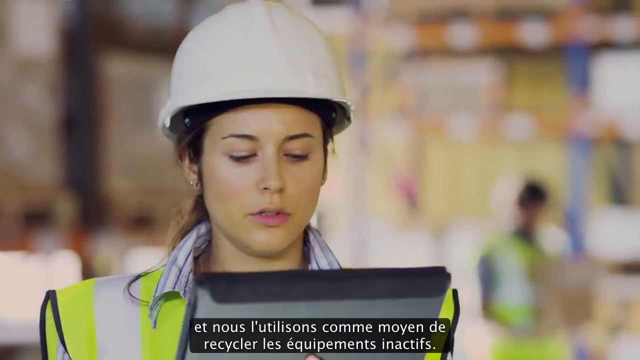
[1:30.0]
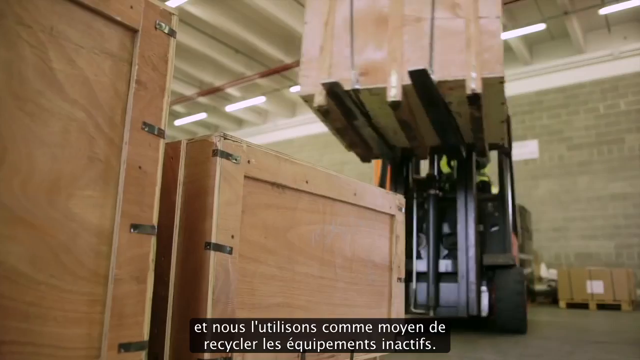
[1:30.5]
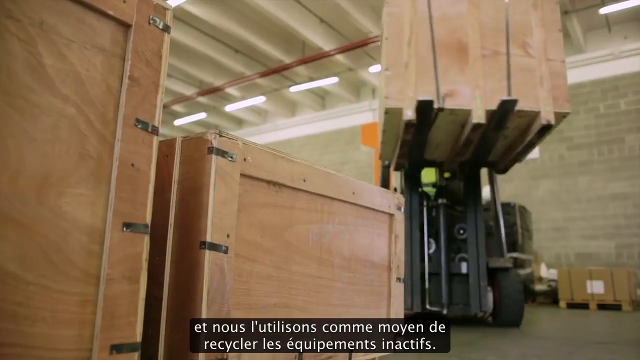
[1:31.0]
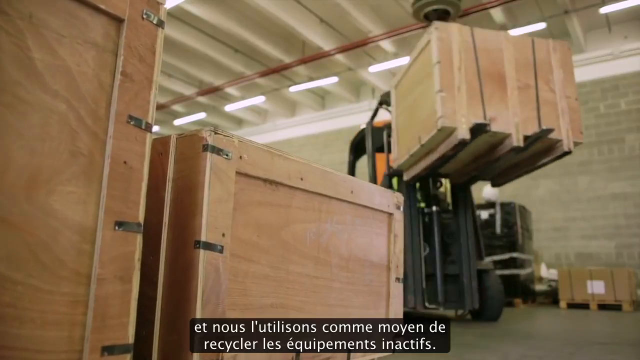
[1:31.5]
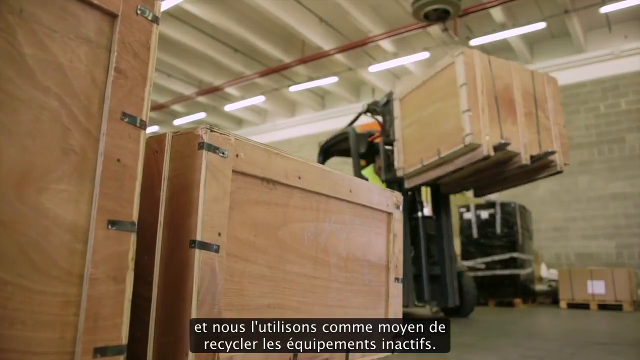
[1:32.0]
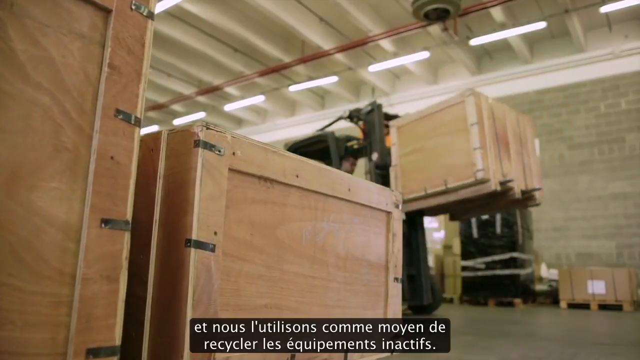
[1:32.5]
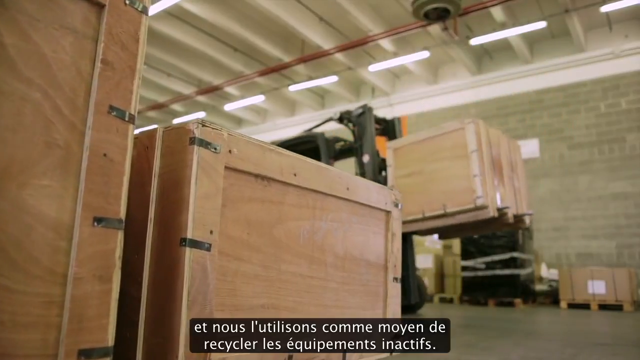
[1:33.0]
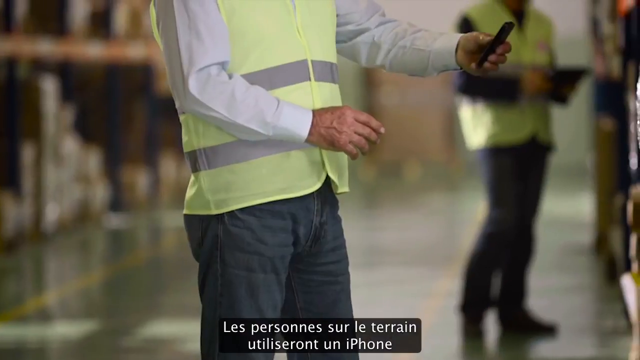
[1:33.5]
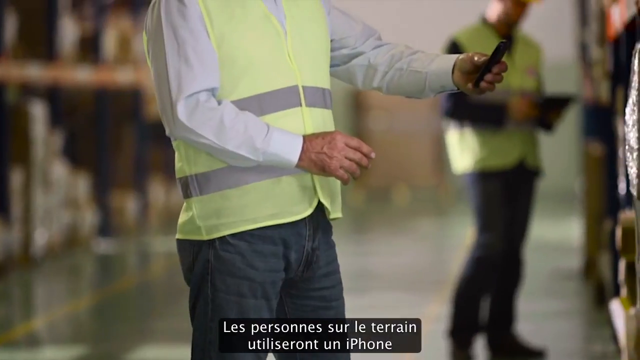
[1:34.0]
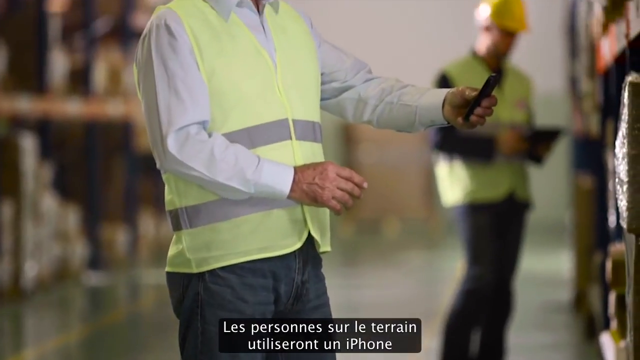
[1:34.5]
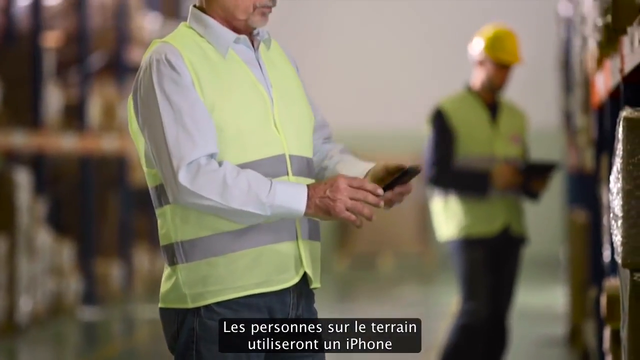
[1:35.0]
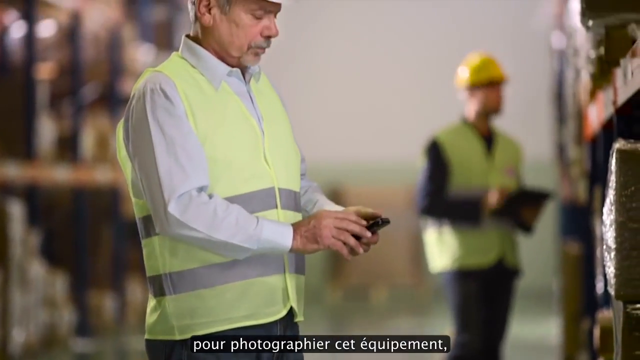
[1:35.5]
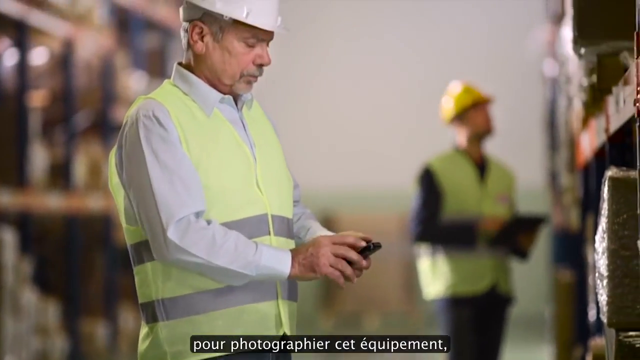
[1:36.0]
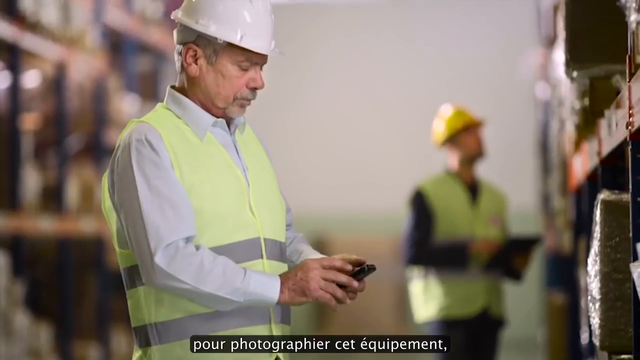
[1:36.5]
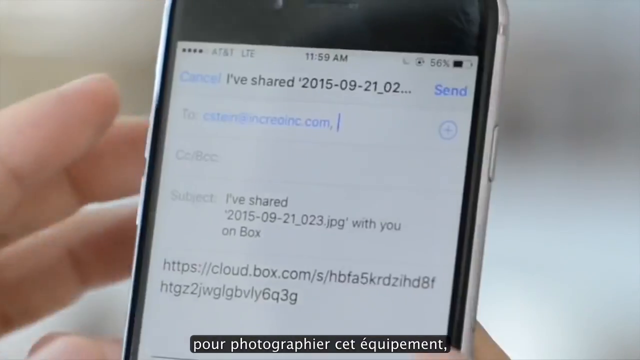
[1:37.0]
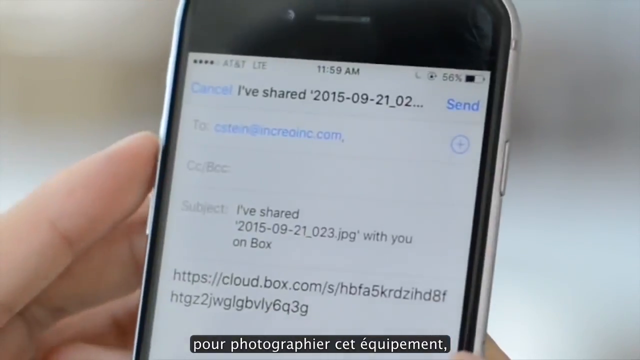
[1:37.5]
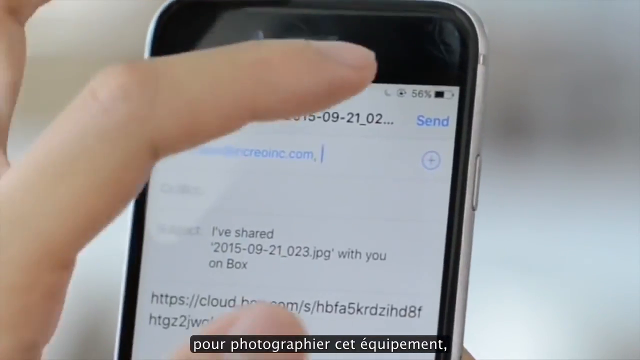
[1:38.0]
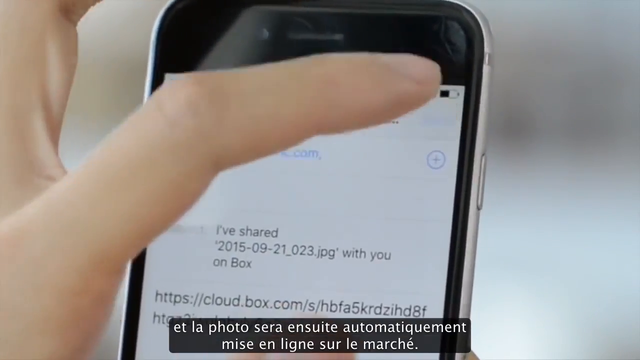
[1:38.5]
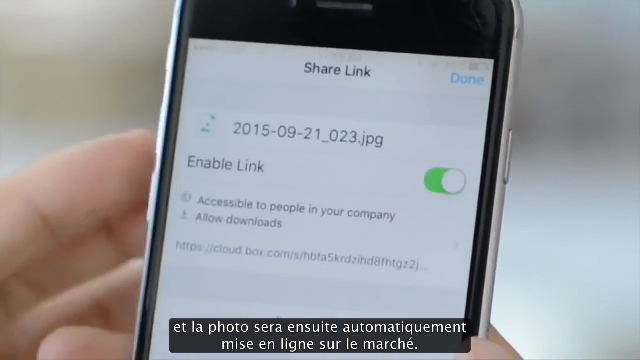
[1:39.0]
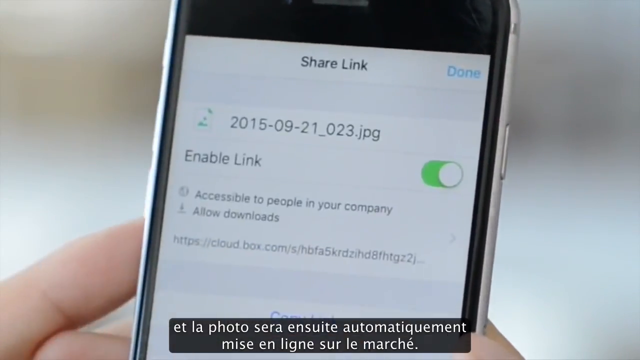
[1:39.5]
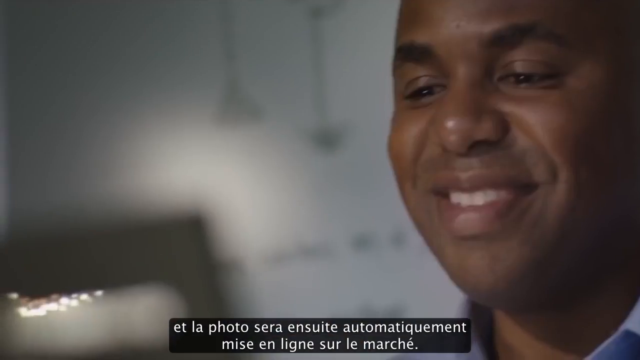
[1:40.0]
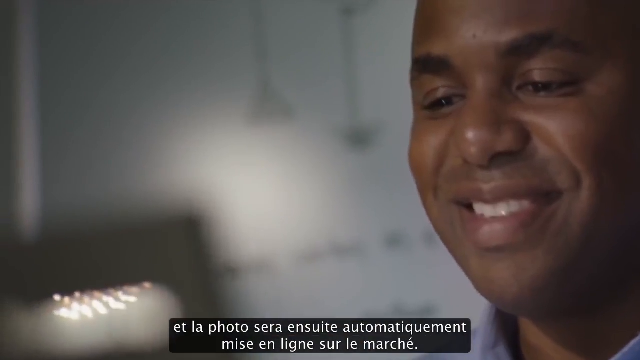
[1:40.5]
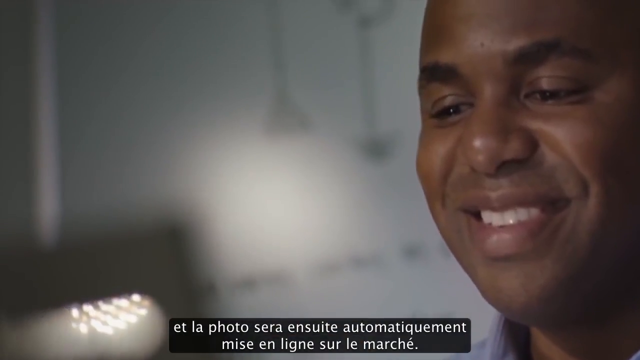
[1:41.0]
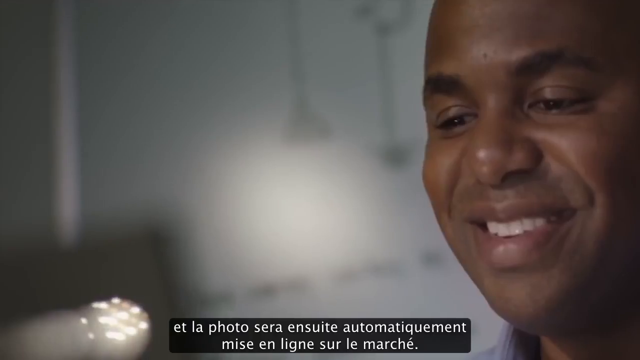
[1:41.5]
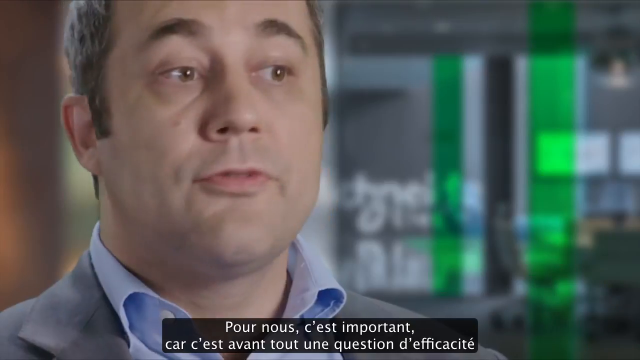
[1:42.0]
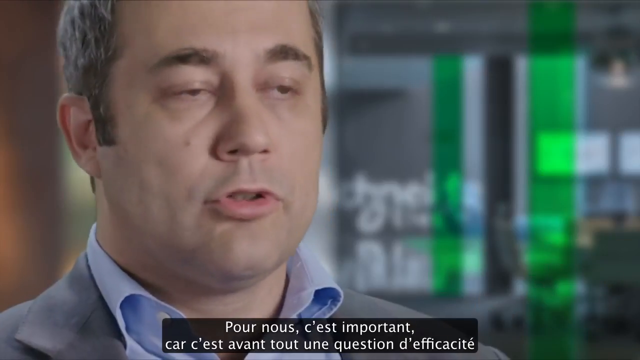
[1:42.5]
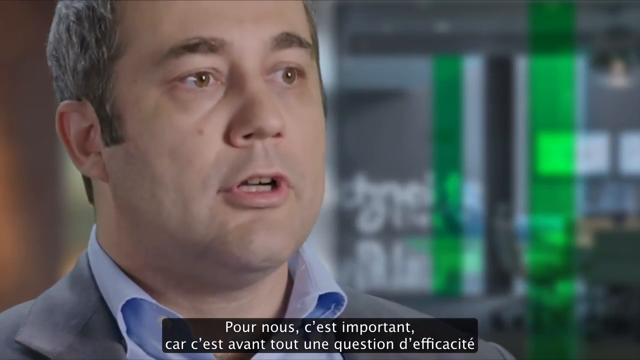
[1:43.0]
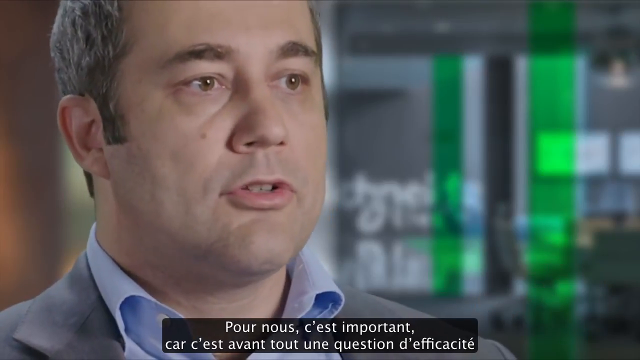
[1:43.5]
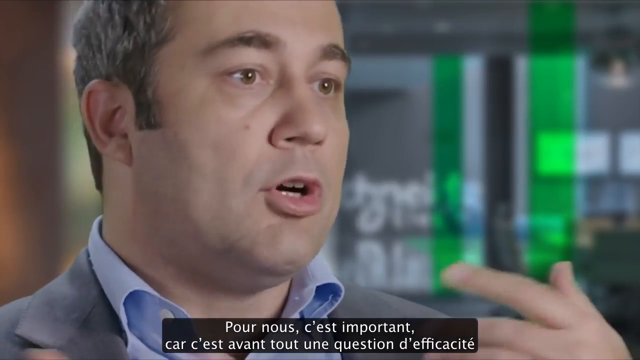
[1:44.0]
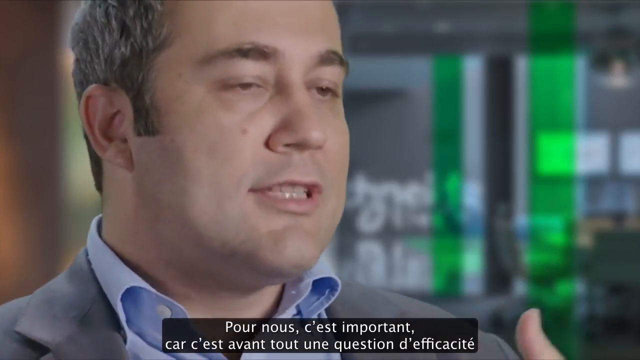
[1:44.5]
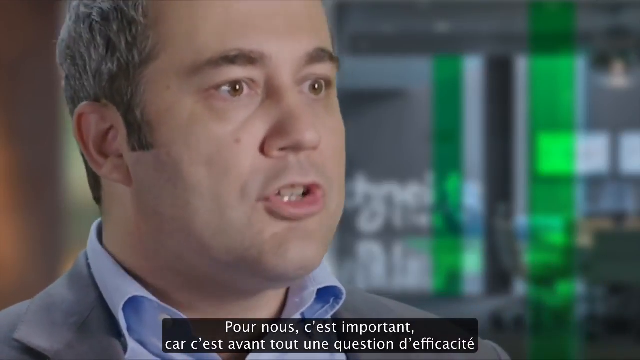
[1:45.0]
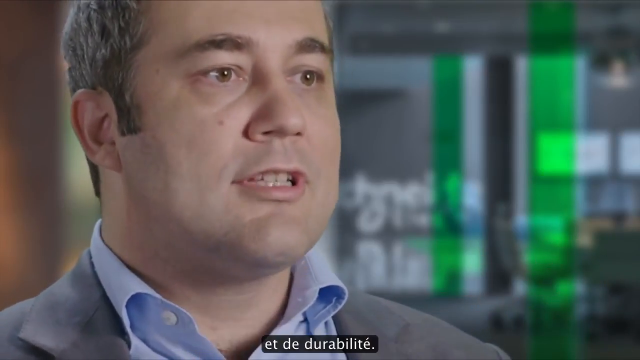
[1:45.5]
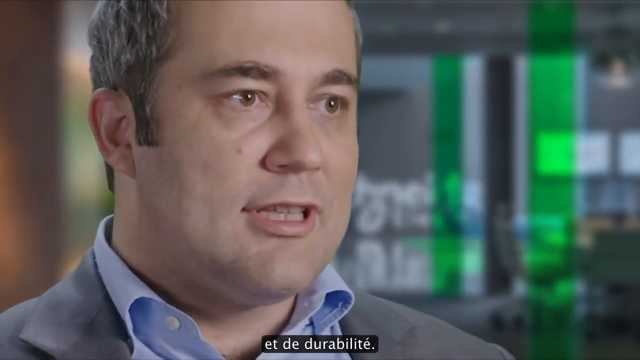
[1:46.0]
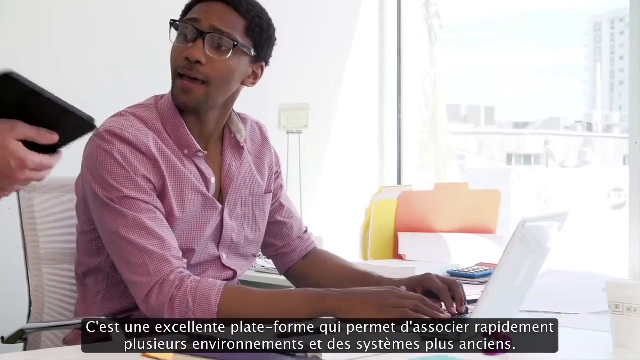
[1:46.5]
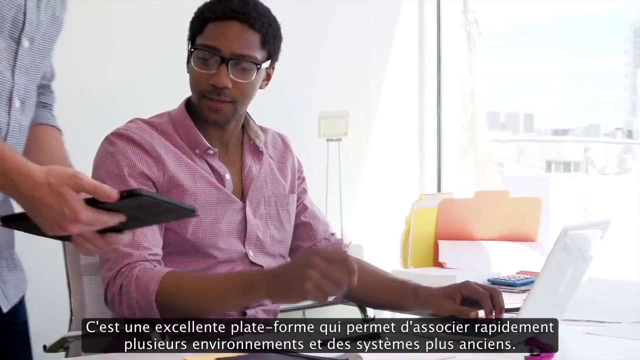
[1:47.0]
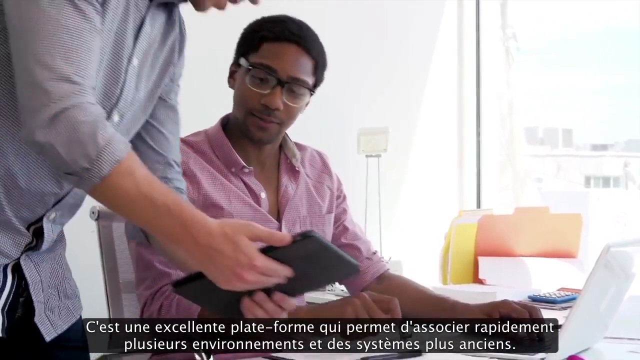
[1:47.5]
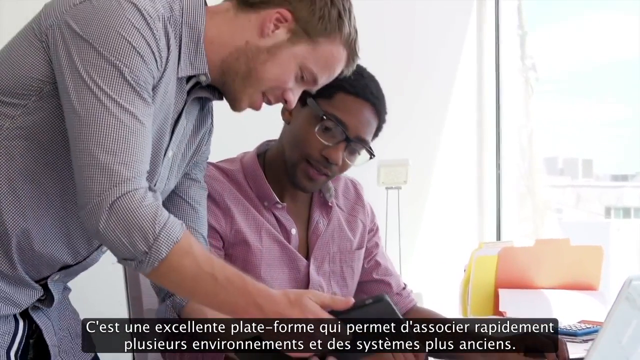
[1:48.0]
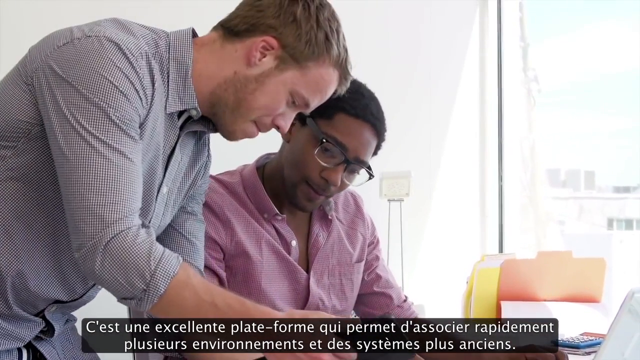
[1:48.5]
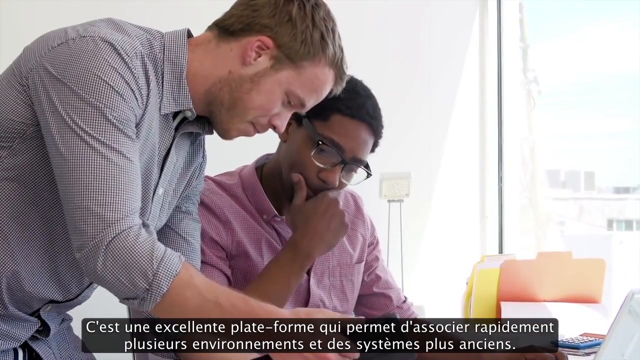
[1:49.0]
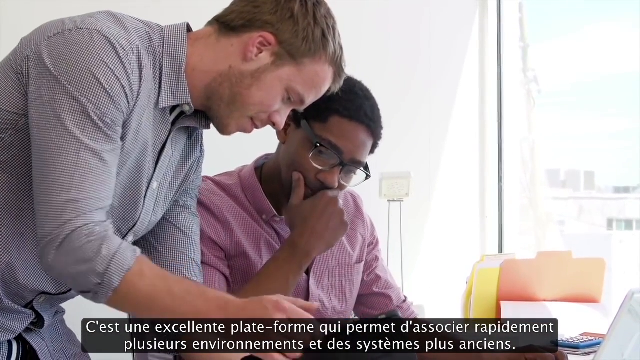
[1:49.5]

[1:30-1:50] The woman is shown working at what looks like a very busy firm with machinery. Everyone is working, and people are busy in their homes making transactions. The man appears again, talking and seeming very concerned. There is also footage of someone coming with a laptop to a man to show him something, probably about work. The video appears to present people being busy, and using electricity, both in offices and remotely.